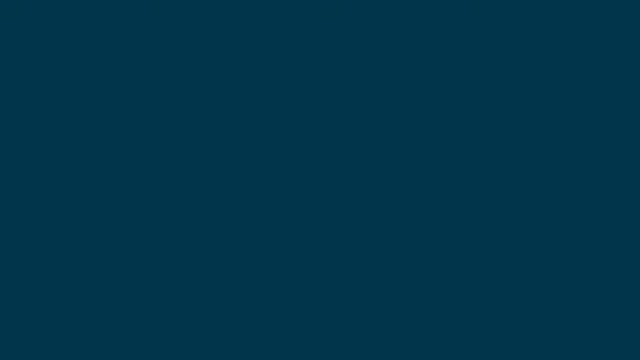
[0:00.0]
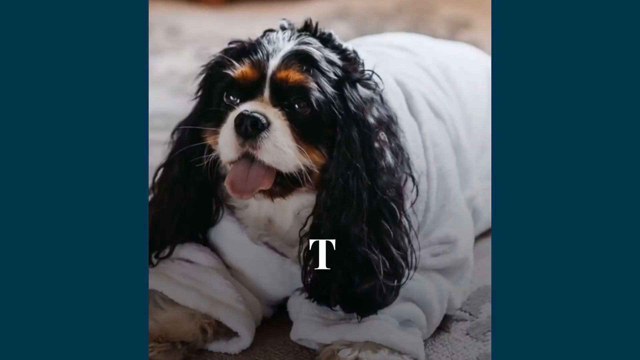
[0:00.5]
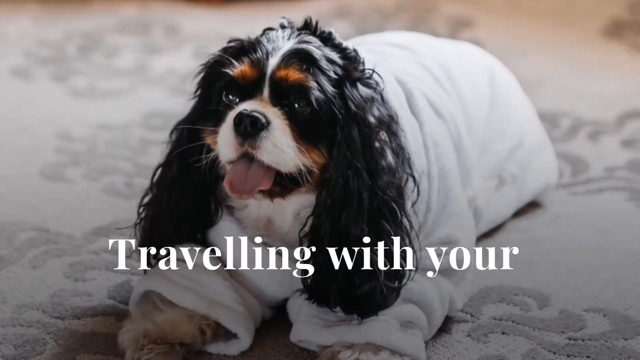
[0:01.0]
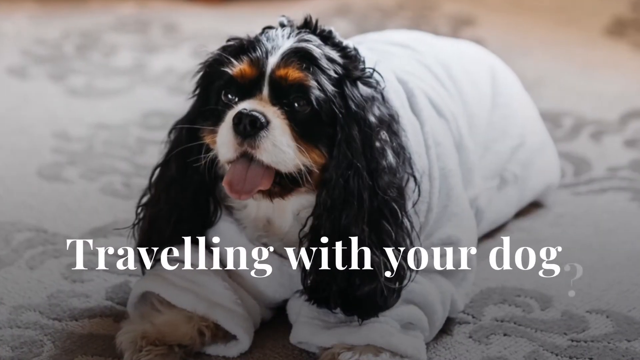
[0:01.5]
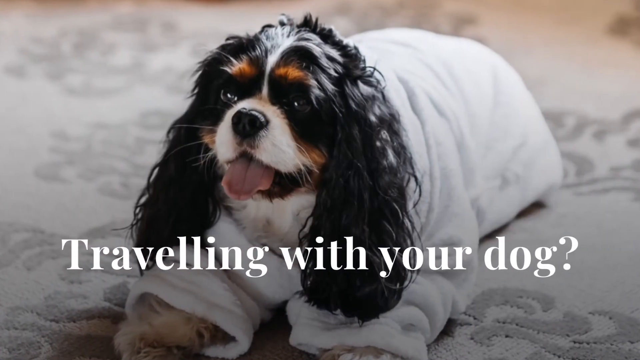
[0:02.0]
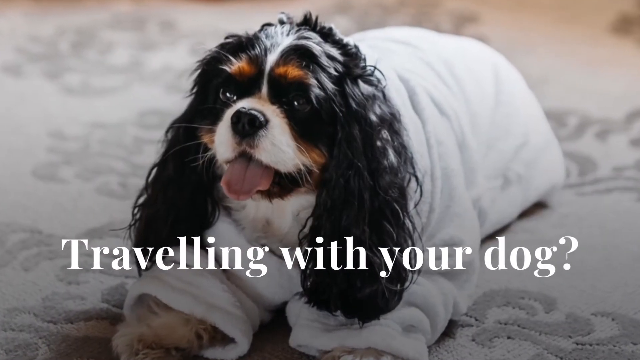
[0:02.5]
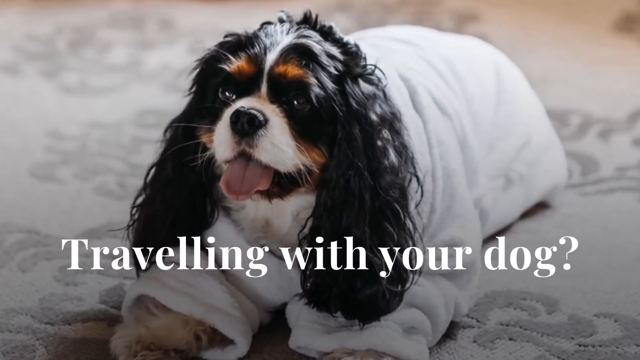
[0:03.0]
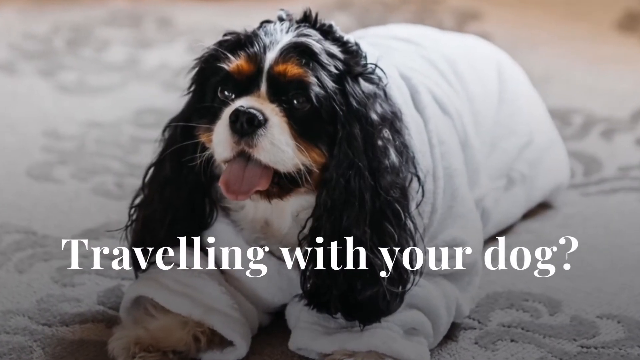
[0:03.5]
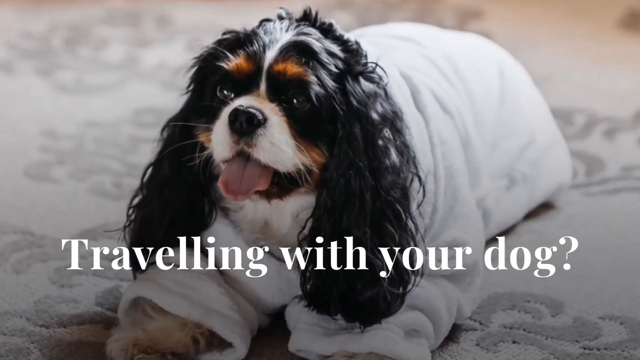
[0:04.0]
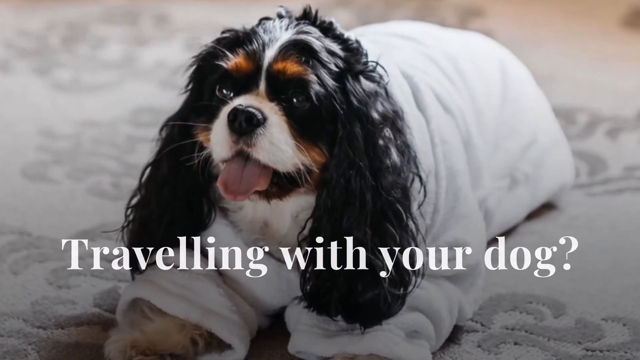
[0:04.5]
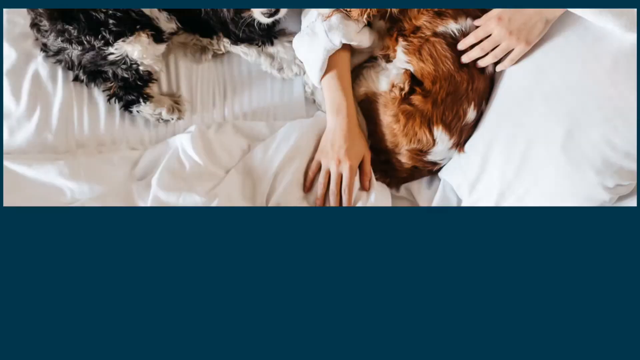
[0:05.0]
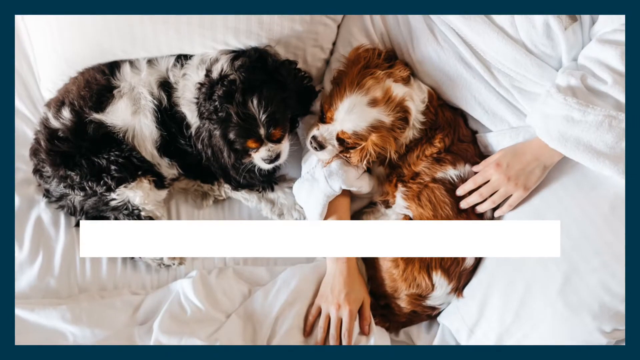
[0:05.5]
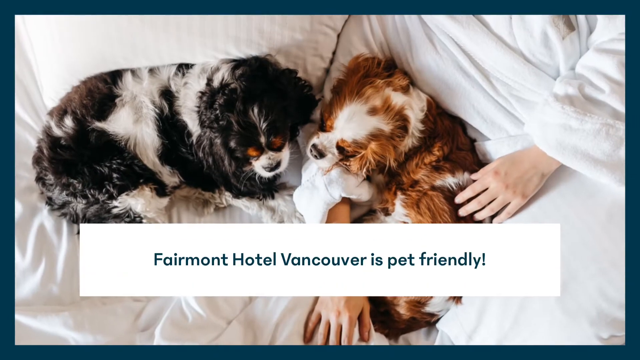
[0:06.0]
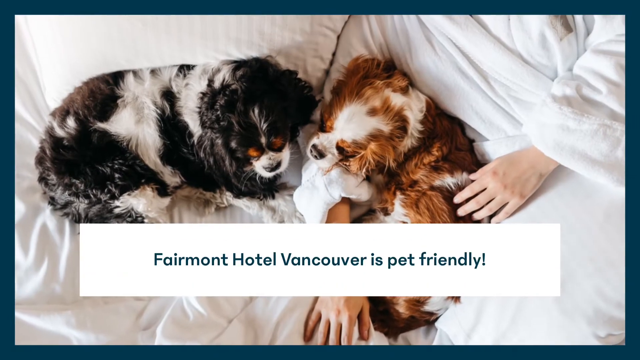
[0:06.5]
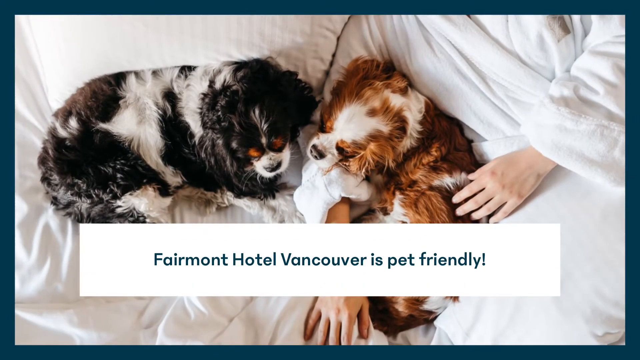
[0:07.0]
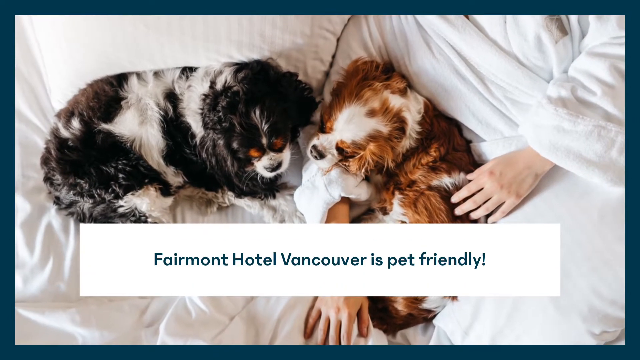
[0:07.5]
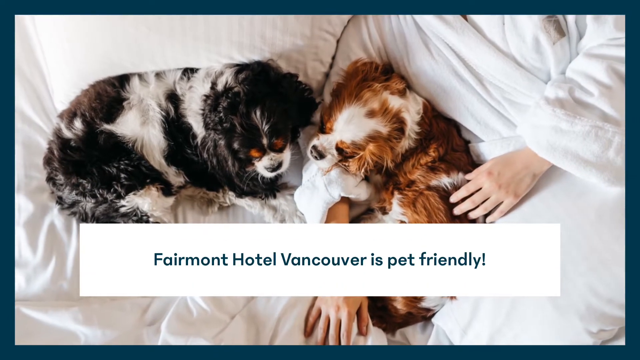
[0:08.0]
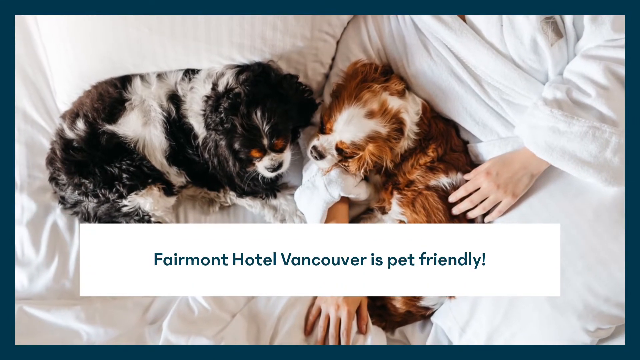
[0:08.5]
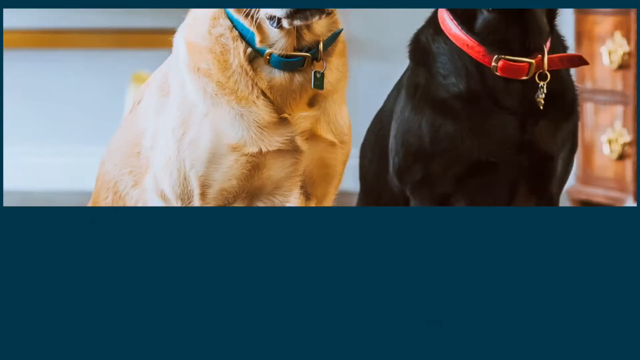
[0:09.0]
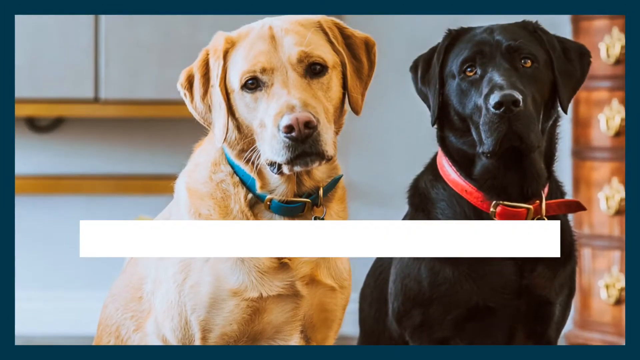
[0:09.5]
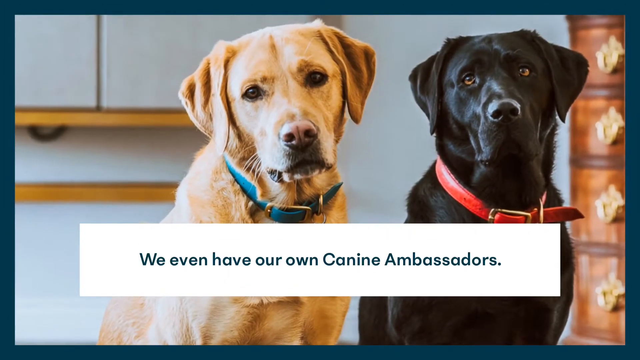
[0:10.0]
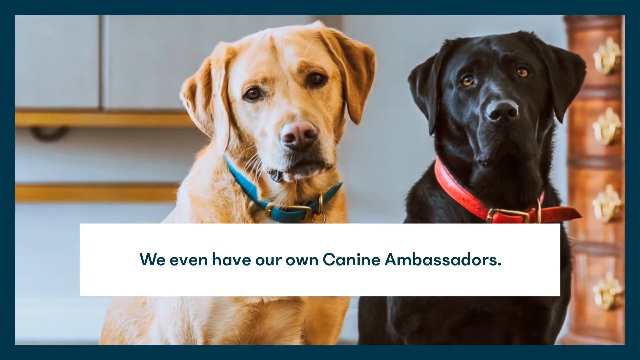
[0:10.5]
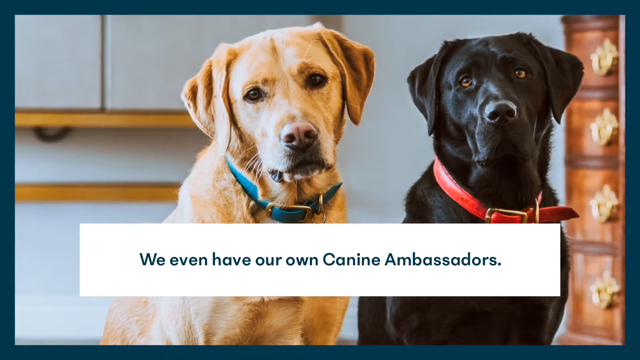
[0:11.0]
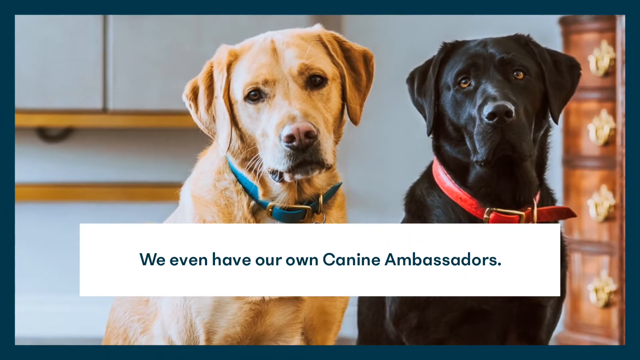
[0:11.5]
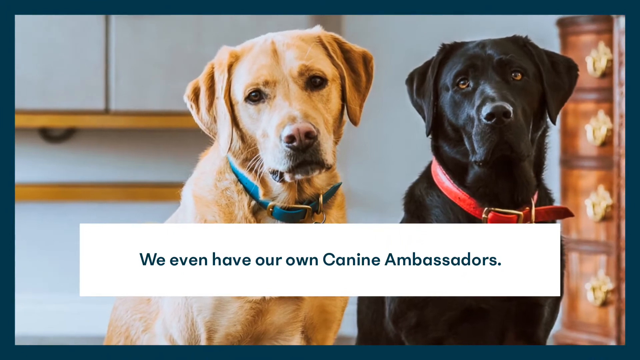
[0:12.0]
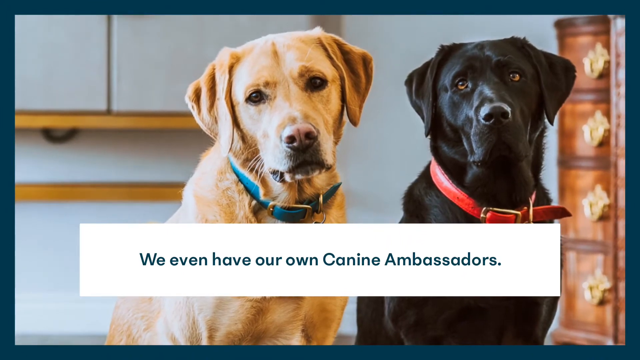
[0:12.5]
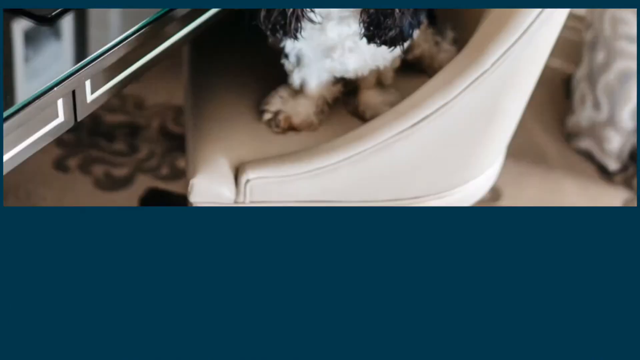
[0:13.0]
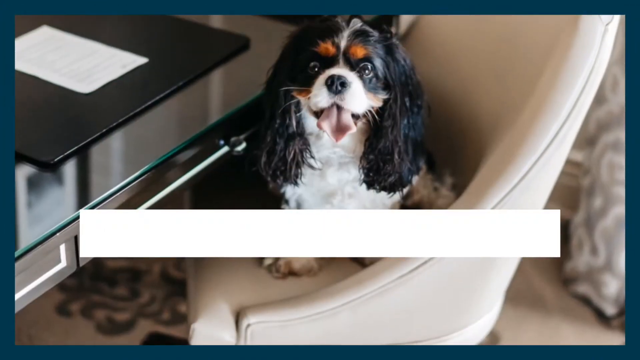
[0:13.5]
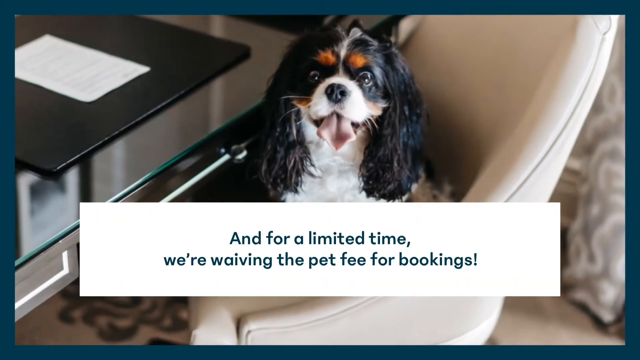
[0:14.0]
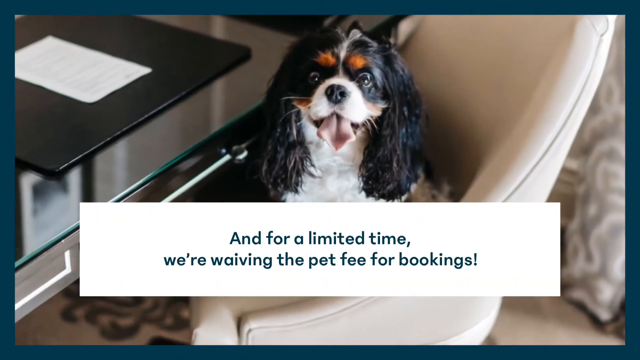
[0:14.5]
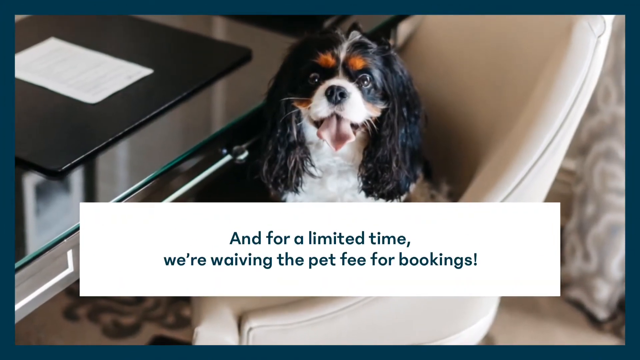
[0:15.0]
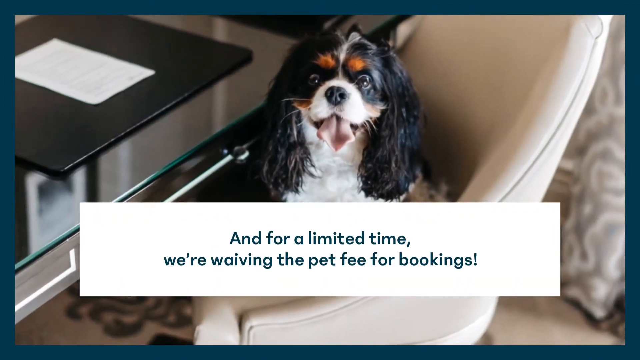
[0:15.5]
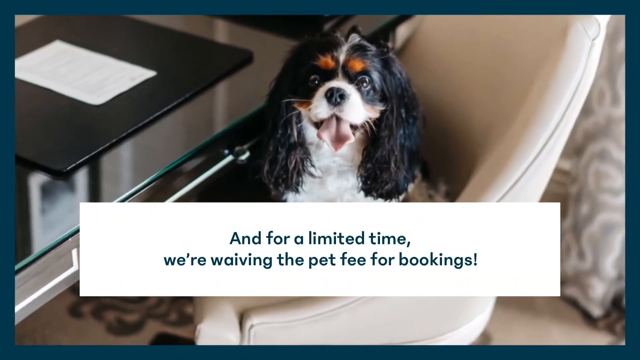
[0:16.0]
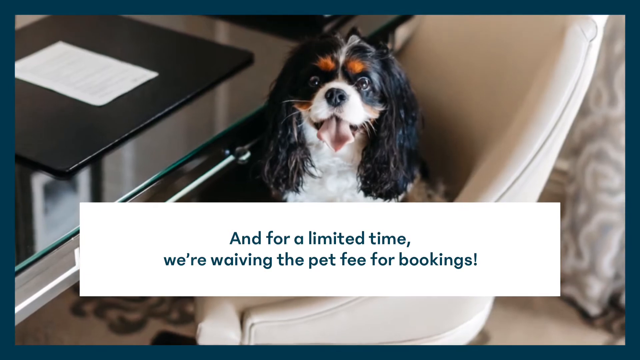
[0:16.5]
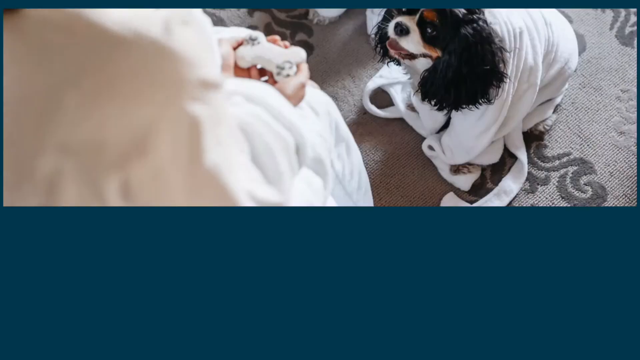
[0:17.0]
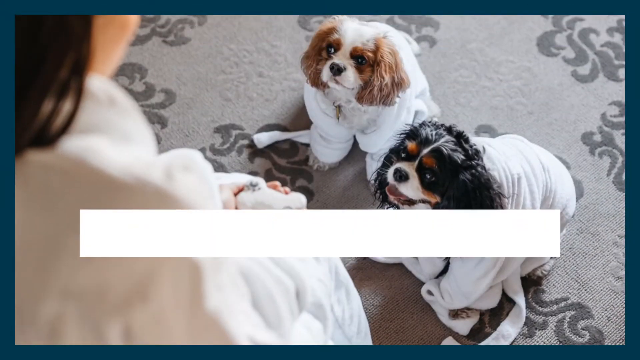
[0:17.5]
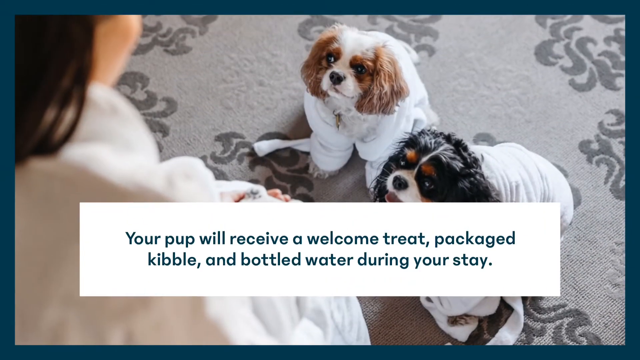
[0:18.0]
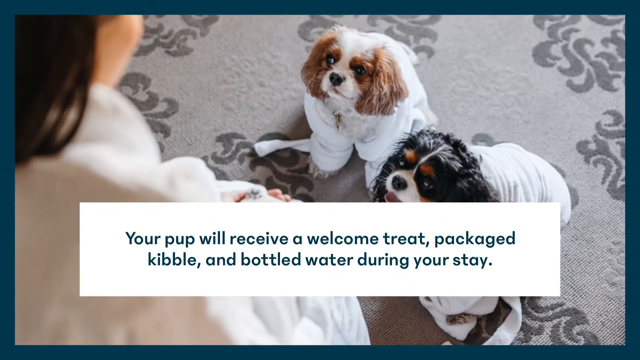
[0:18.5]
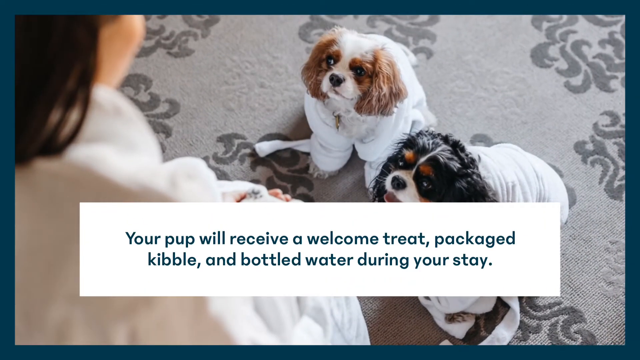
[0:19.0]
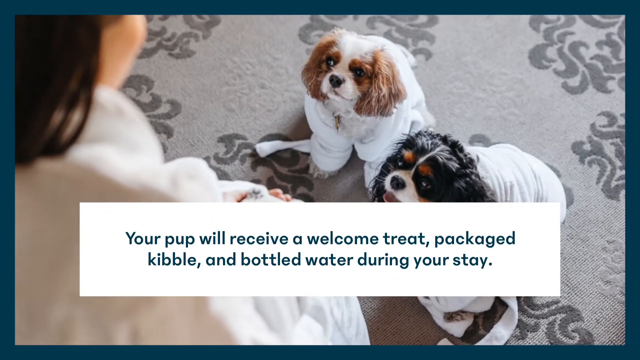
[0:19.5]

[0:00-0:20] The video starts on a dark blue screen, then transitions with a white center where the screen separates in the middle of the image and widens to reveal a picture of a dog in a sweater. It is a small dog, not a King Charles Cavalier but roughly that size. White text appears at the bottom of the screen reading "traveling with your dog?" An image of two dogs sitting on a hotel bed slides down into the screen, with a human's hand also visible. A white box over the image says "Fairmont Hotel Vancouver is pet friendly" in blue text. Another image, of a golden lab and a black lab, drops into the screen, and the white box says, again in blue text, "we even have our own Canine Ambassadors," with "Canine" and "Ambassadors" capitalized. A new image of the King Charles Cavalier-like dog drops in; this time he is sitting on a work chair. The box reads "and for a limited time, we're waiving the pet fee for bookings." Another image drops into the screen, showing two small dogs, both wearing robes, sitting on a rug with a person in front of them. The white box now reads "Your pup will receive a welcome treat, packaged kibble, and bottled water during your stay."